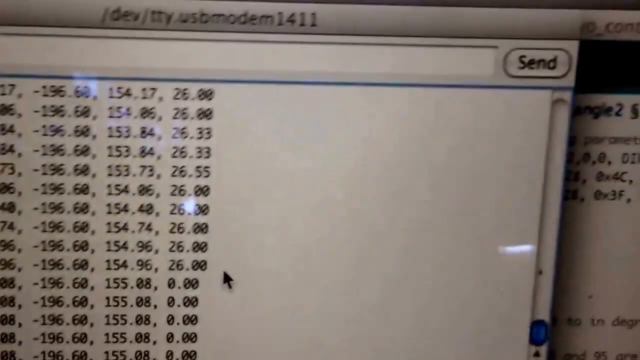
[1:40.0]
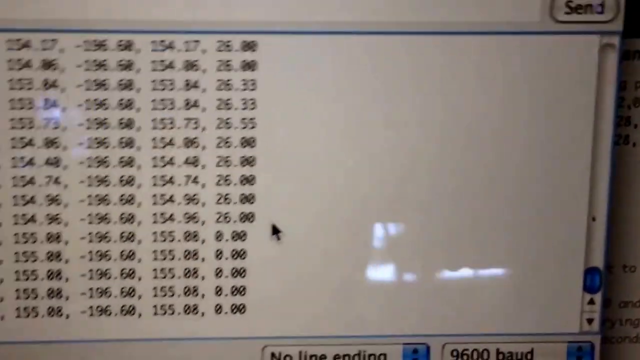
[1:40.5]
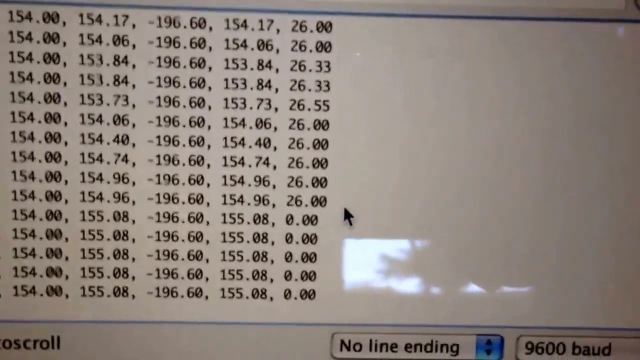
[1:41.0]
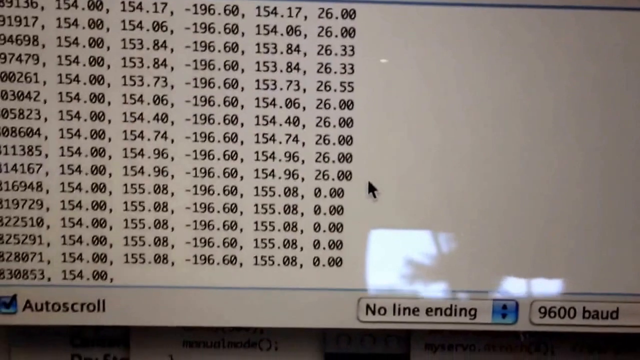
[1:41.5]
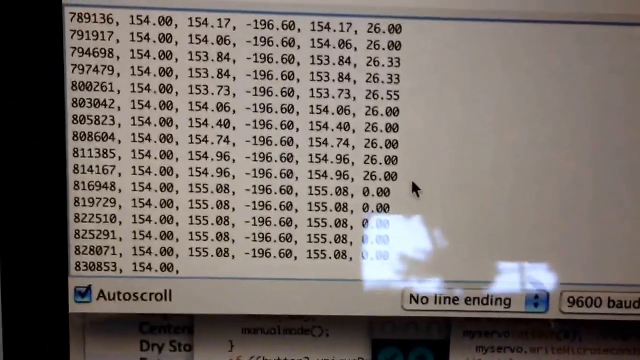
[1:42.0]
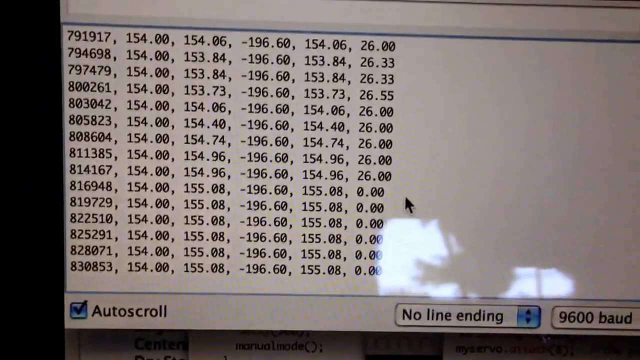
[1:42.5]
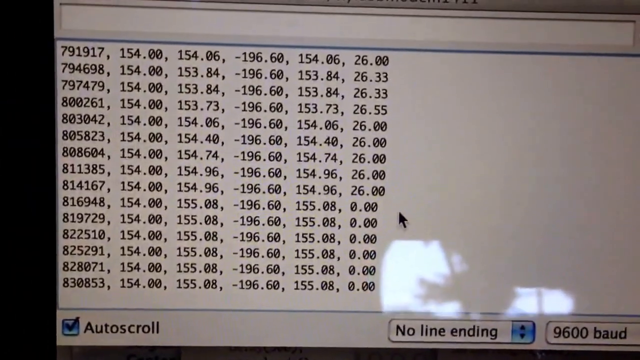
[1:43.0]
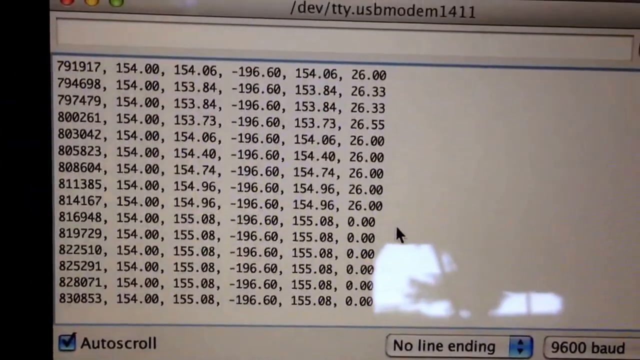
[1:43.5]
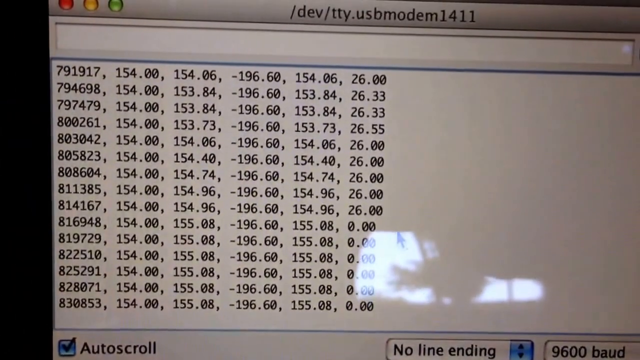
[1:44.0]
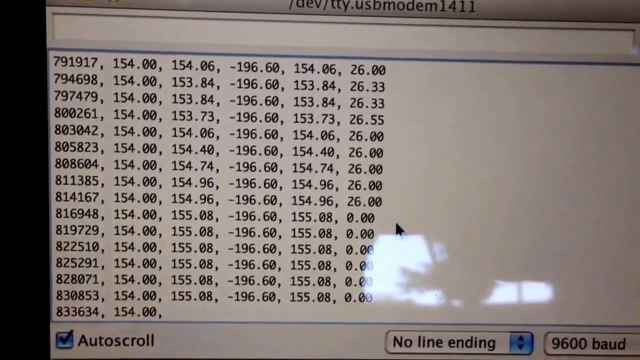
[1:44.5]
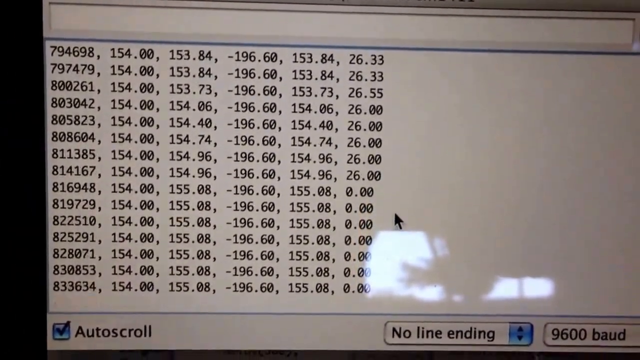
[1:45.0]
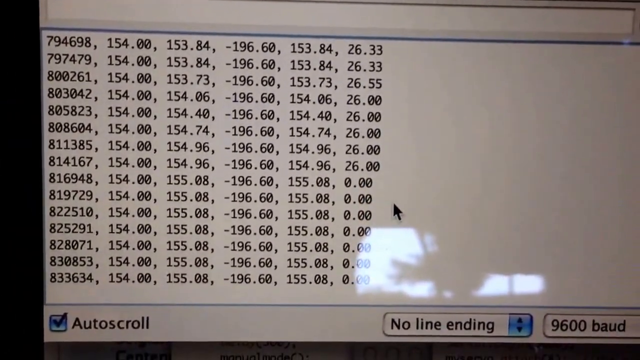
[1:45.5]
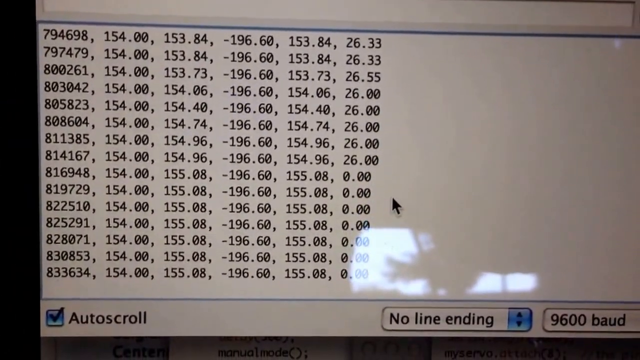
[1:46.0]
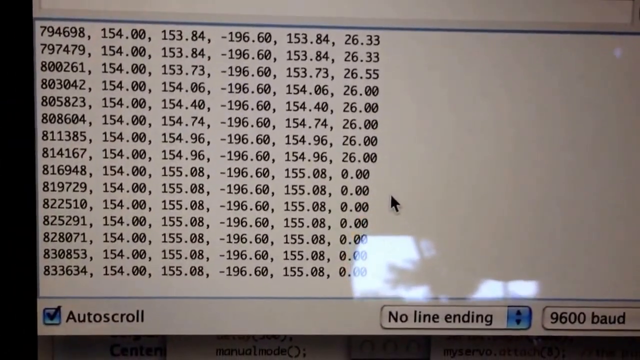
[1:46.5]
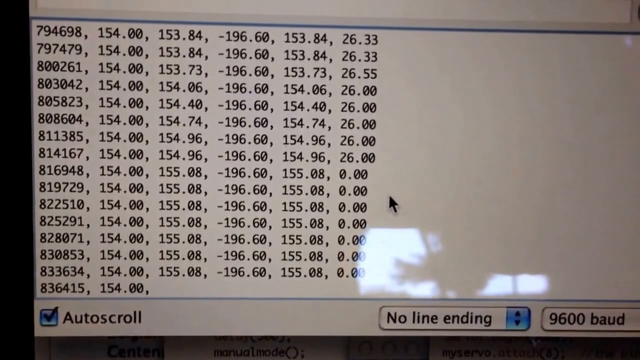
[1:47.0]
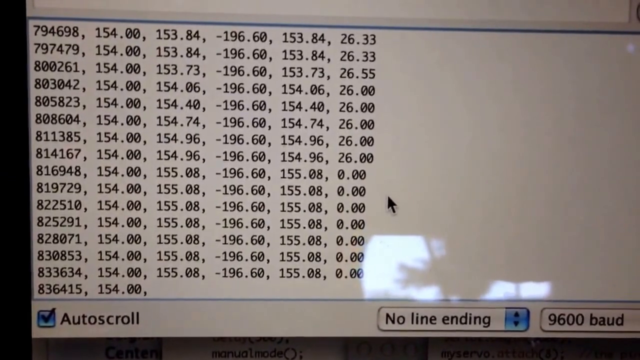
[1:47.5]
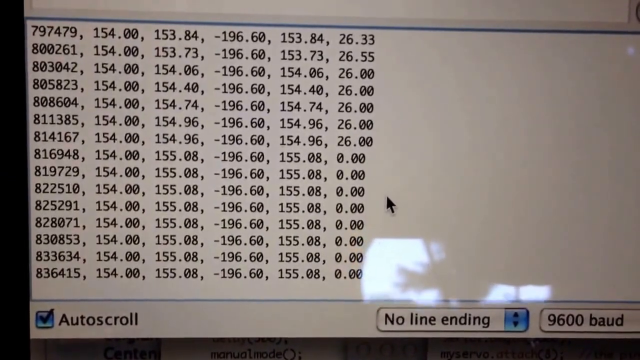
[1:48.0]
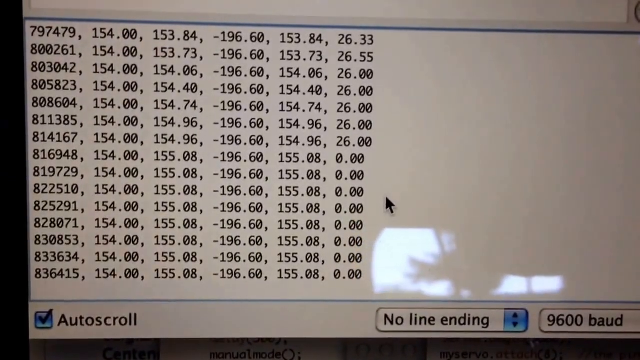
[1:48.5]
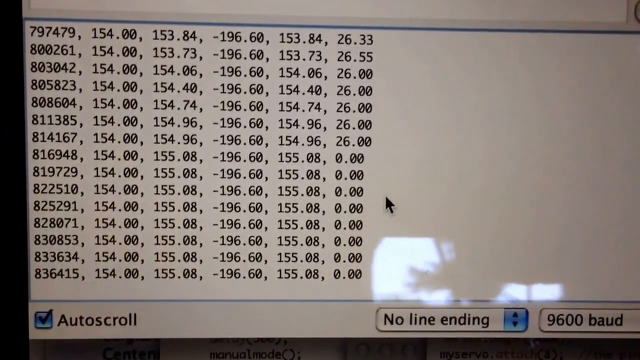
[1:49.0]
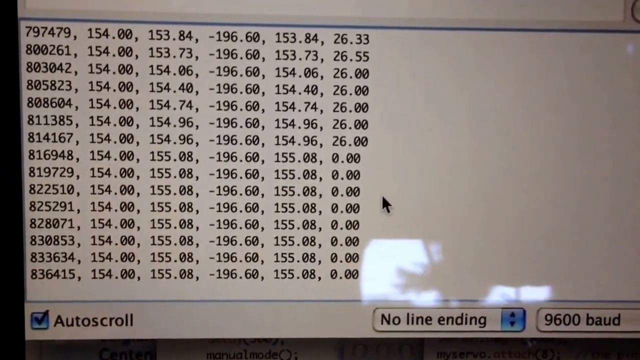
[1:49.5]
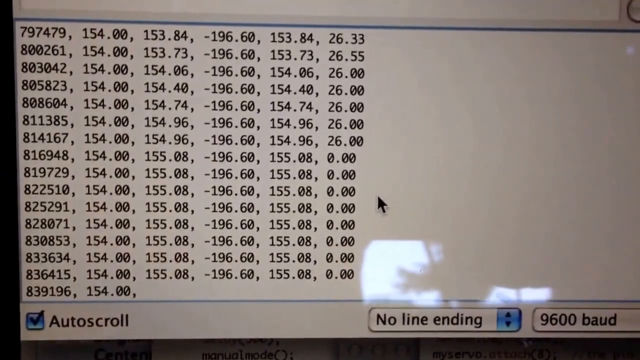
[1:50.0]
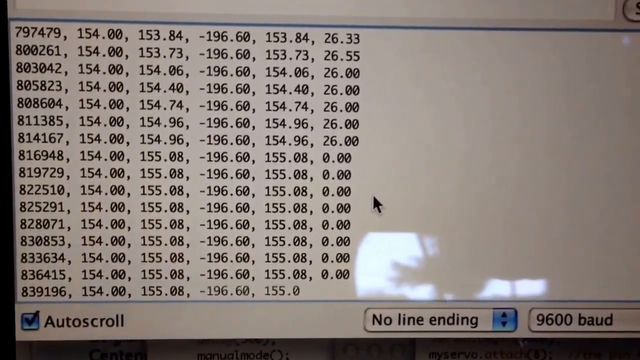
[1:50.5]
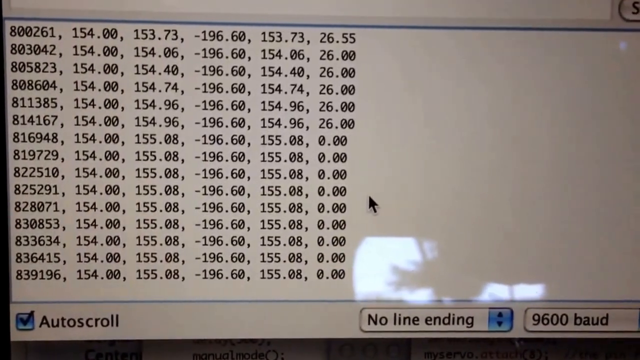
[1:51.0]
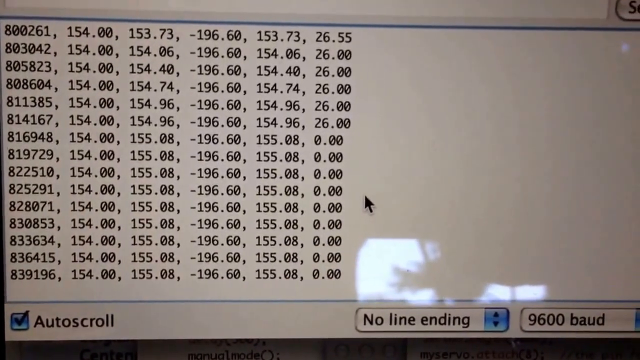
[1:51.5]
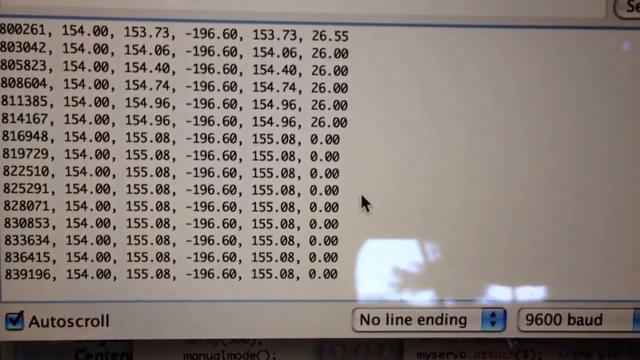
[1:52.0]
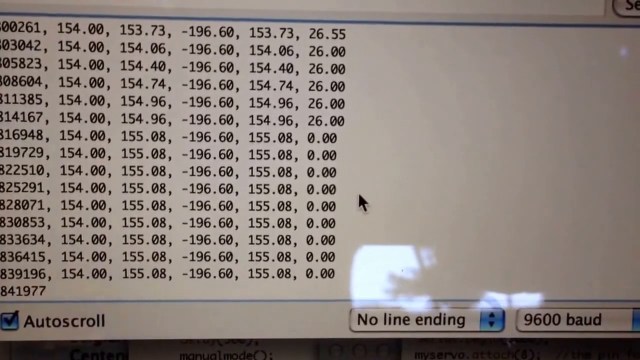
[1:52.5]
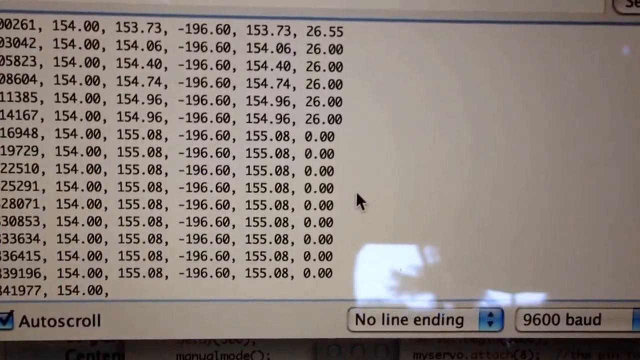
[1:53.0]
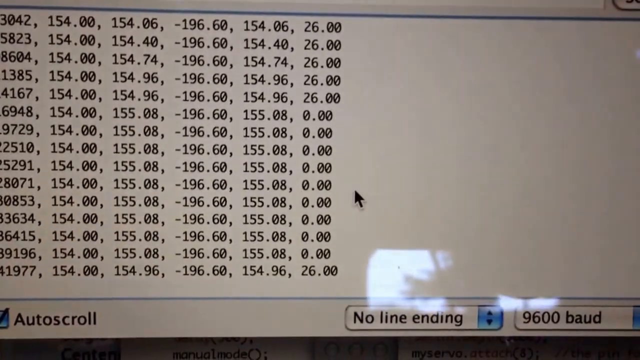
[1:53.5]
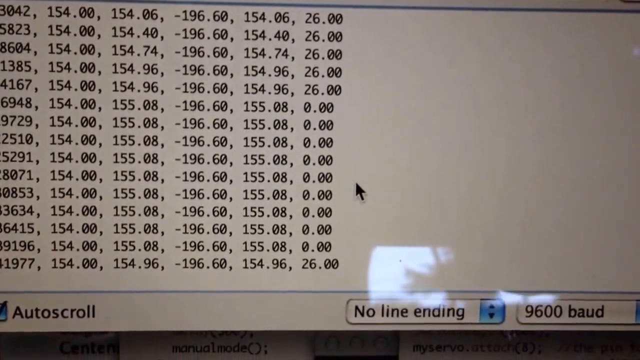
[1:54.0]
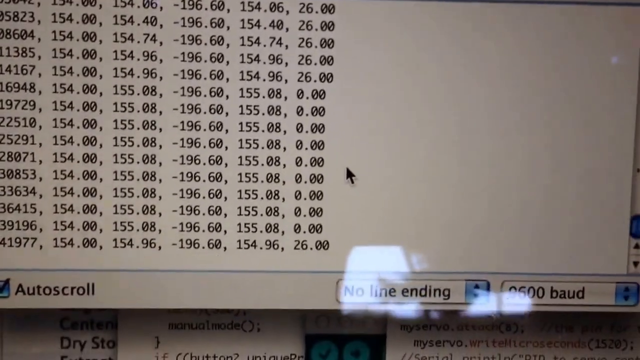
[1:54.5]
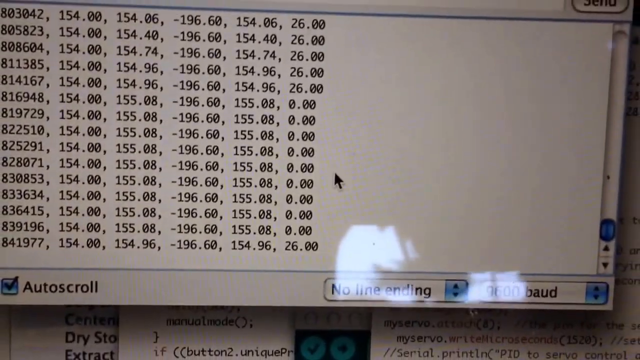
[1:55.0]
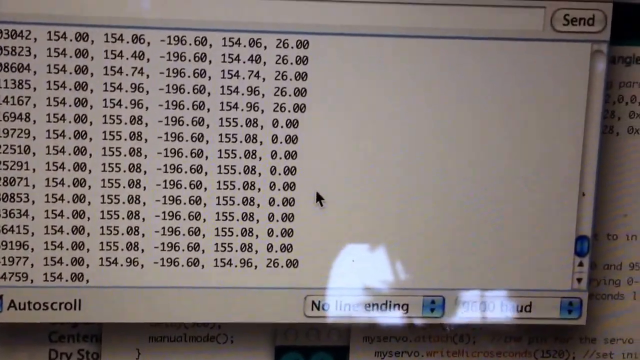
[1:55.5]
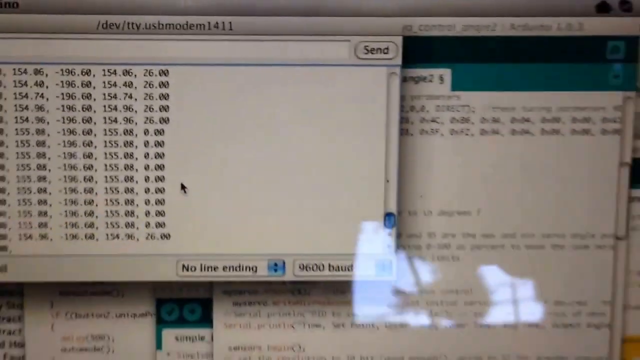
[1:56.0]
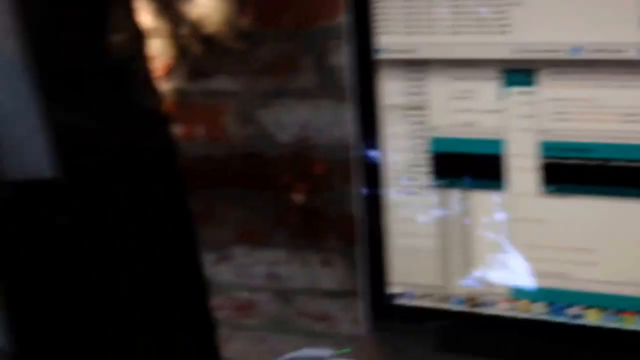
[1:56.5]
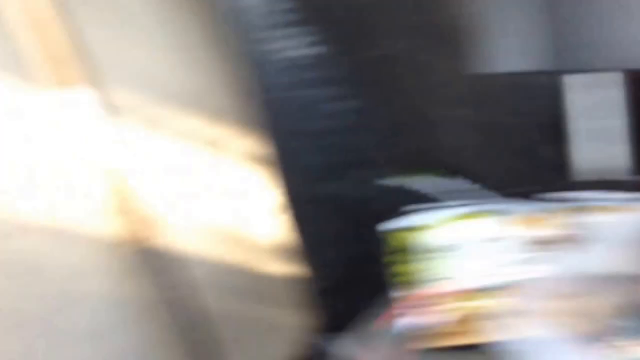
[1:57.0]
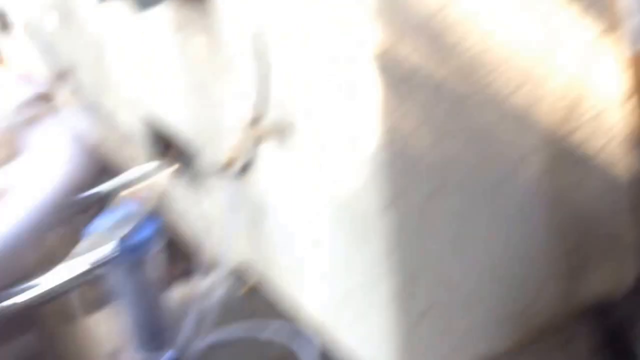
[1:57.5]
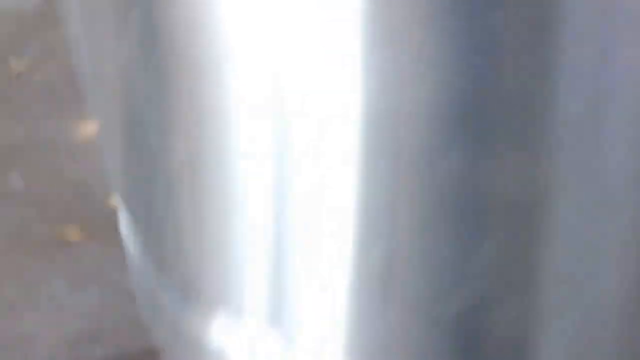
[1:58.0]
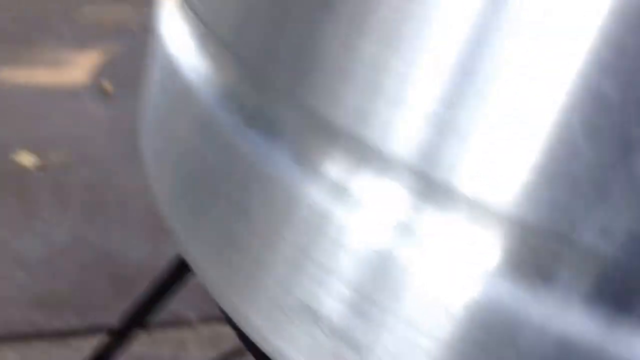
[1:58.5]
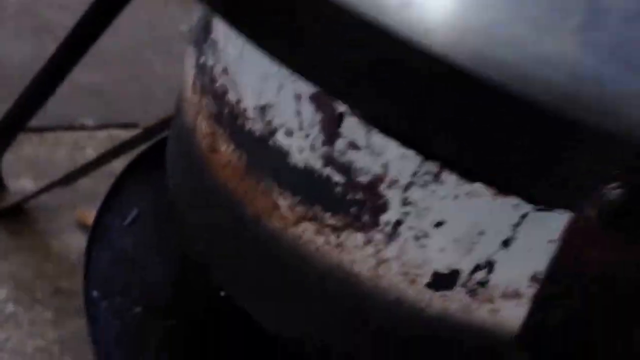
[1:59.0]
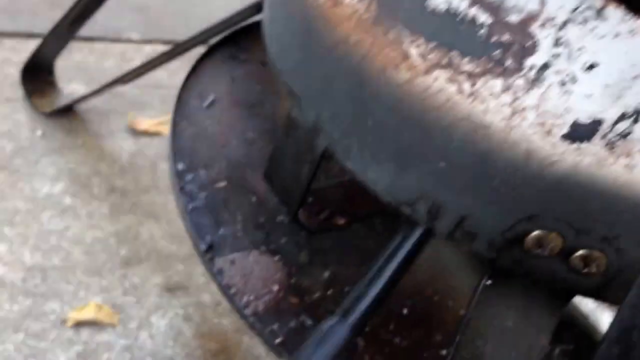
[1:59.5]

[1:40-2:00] The screen of a Mac OS based computer shows a teletype USB modem window with various numbers being typed out. As the camera focuses in on the window, the text is regularly updated with data. The camera then pans around, zooming in on a stove at the base of a large metal pot, which appears to be controlled by the computer. The camera moves to the stove, and the camera operator holds a lighter, a long black electric fire lighter, which is used to ignite the stove. On the screen, numbers update every few seconds. The right-hand column contains the number 26.00, which changes to 0.00 for 9 rows and then back to 26.00. Other numbers include 154.00, 155.08 and -196.60; these appear to be related to telemetry from the temperature sensor and servo motor.